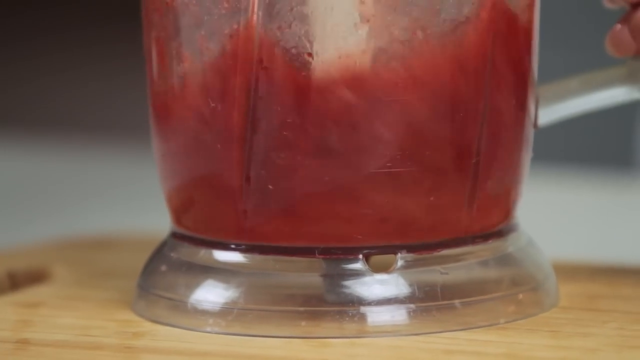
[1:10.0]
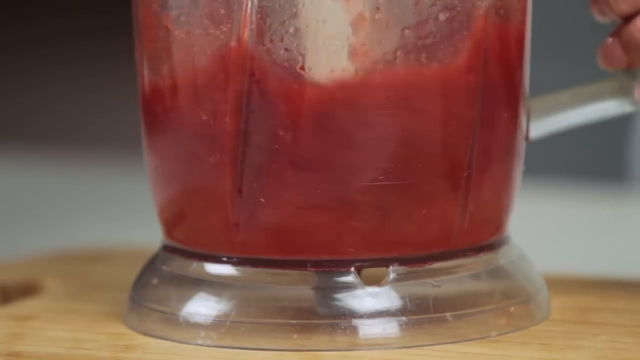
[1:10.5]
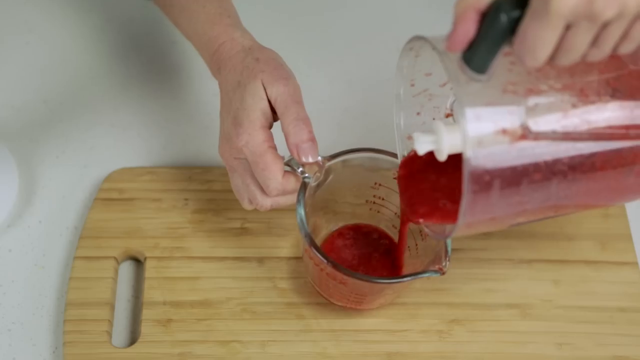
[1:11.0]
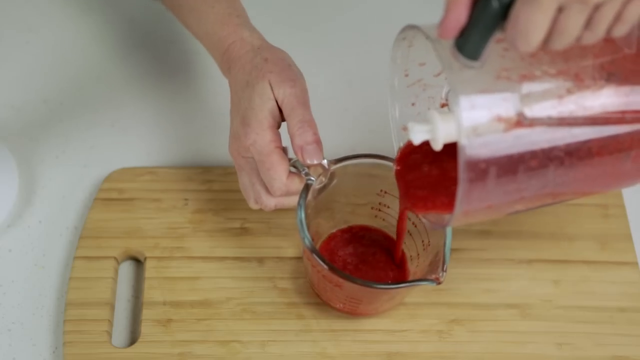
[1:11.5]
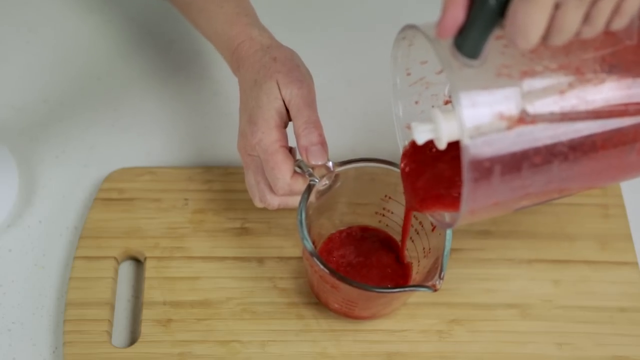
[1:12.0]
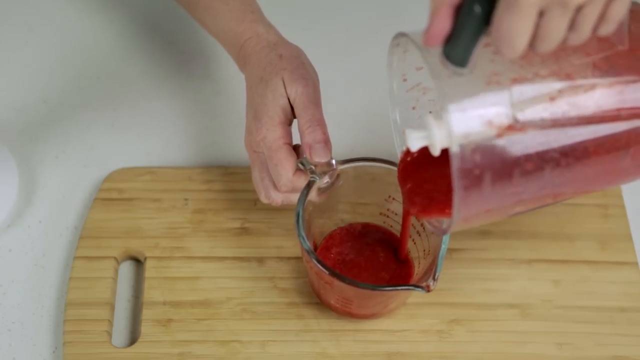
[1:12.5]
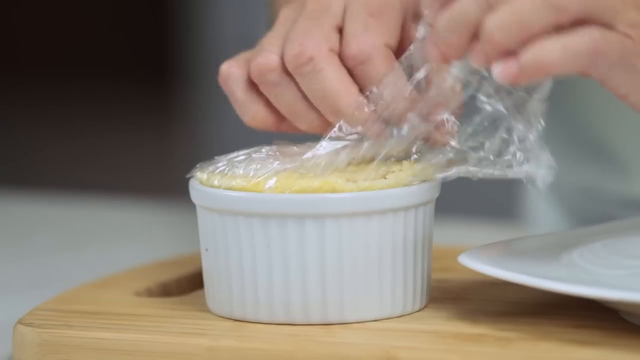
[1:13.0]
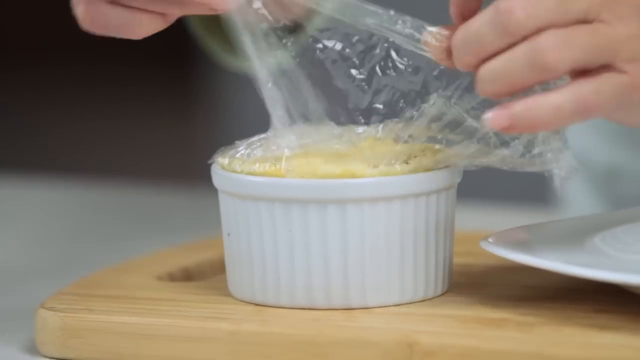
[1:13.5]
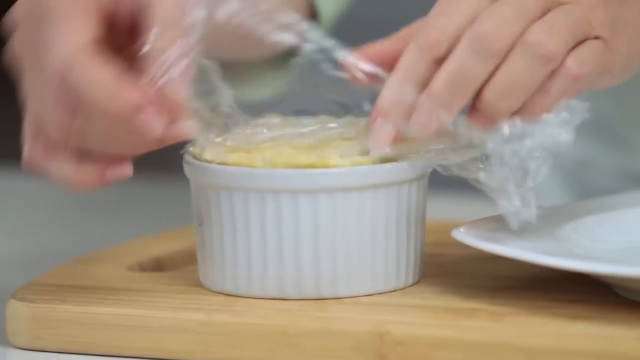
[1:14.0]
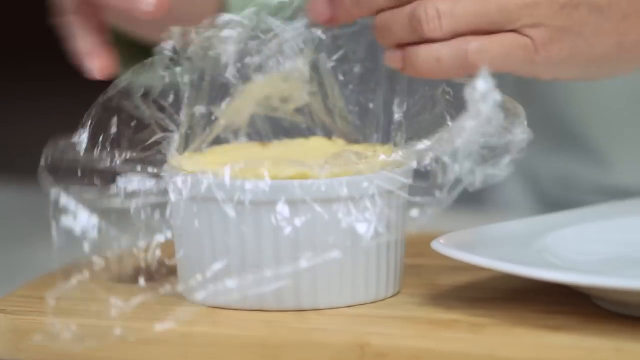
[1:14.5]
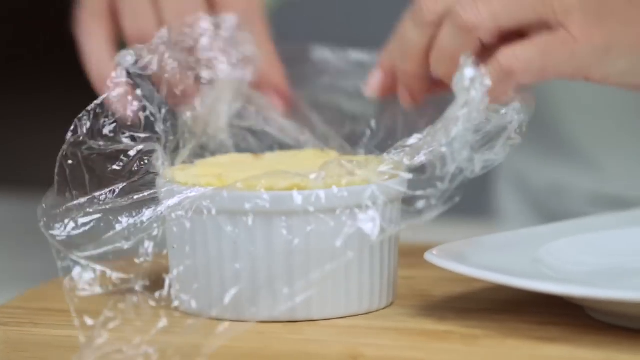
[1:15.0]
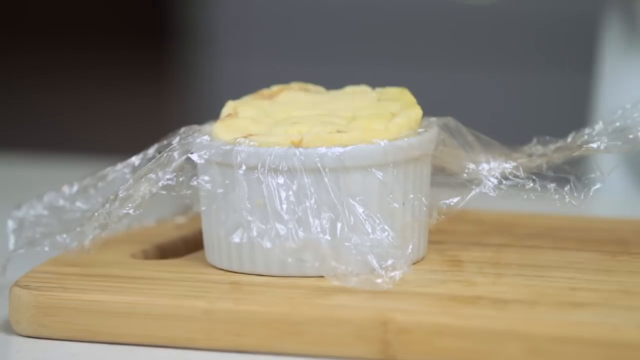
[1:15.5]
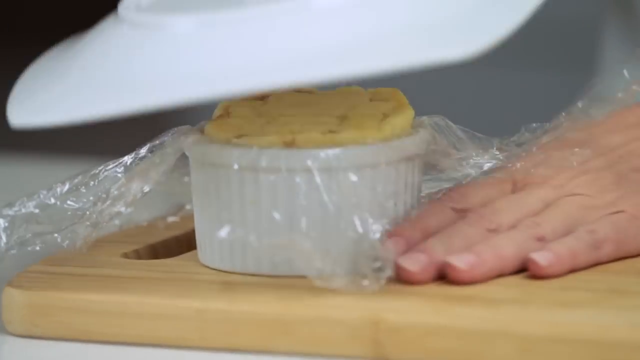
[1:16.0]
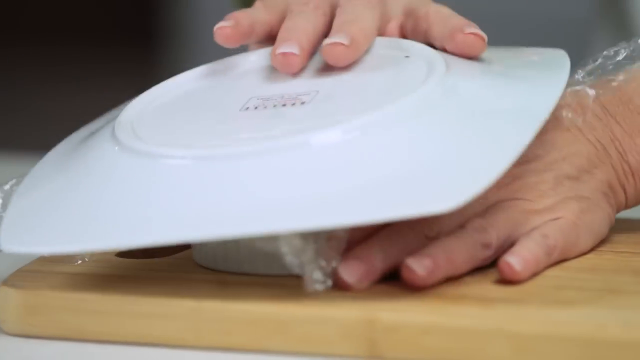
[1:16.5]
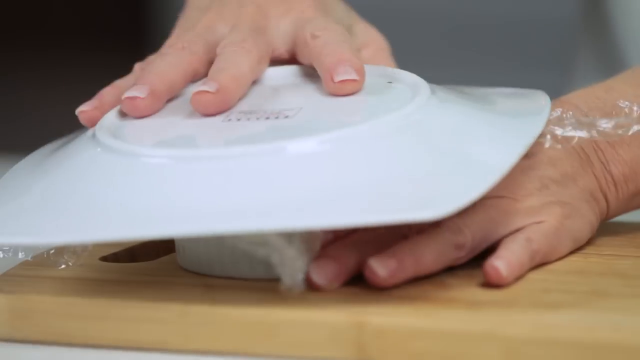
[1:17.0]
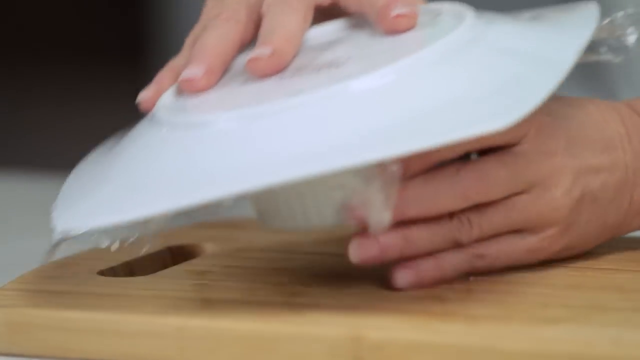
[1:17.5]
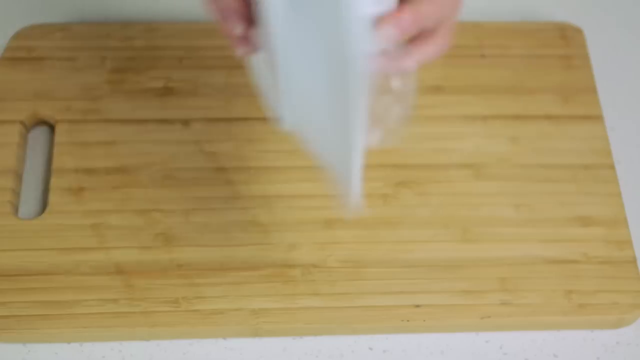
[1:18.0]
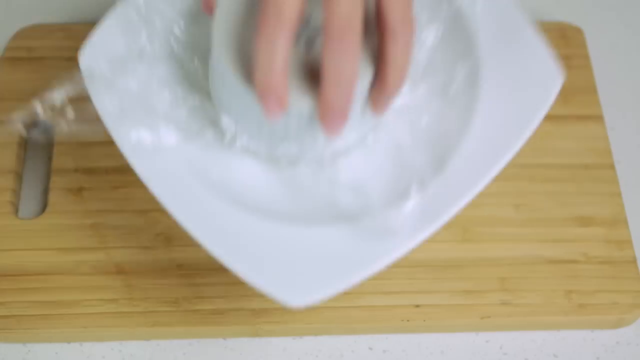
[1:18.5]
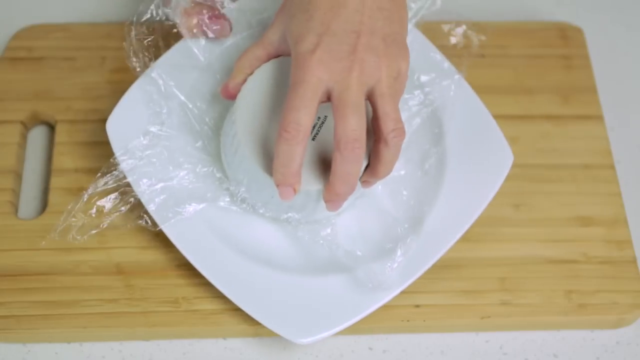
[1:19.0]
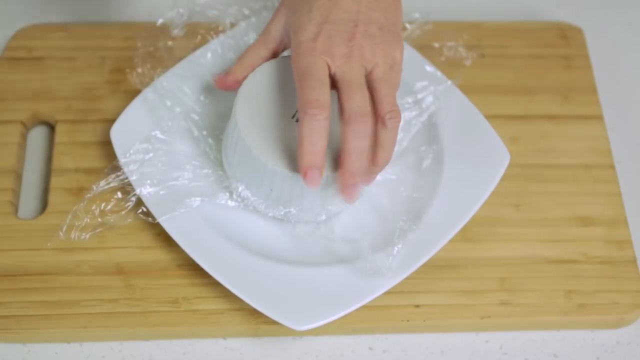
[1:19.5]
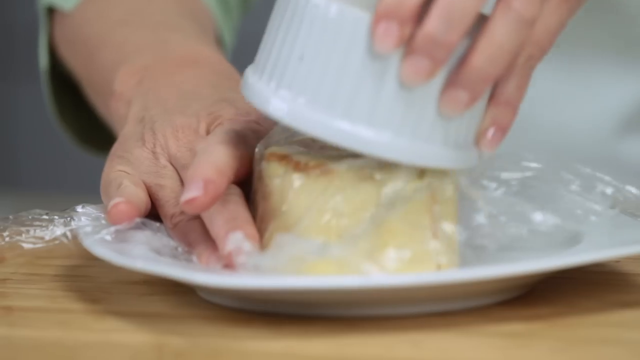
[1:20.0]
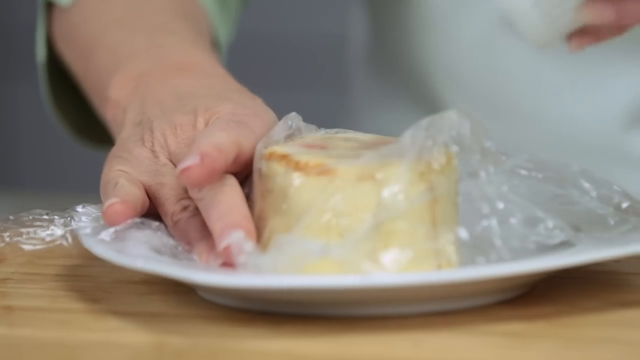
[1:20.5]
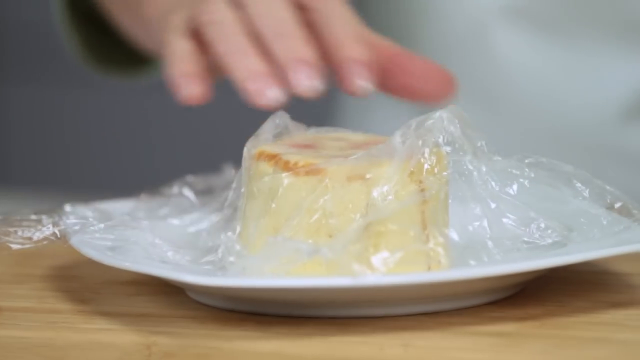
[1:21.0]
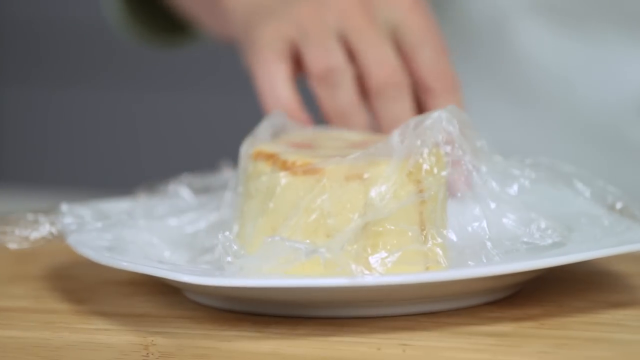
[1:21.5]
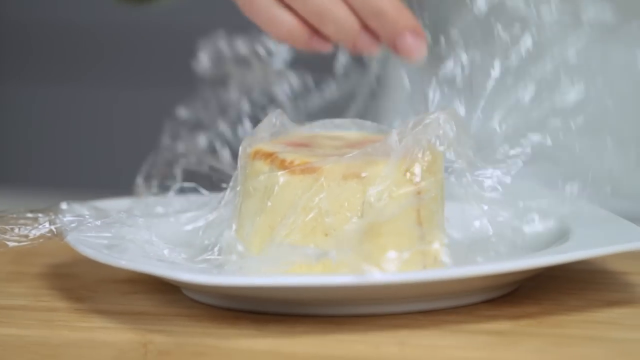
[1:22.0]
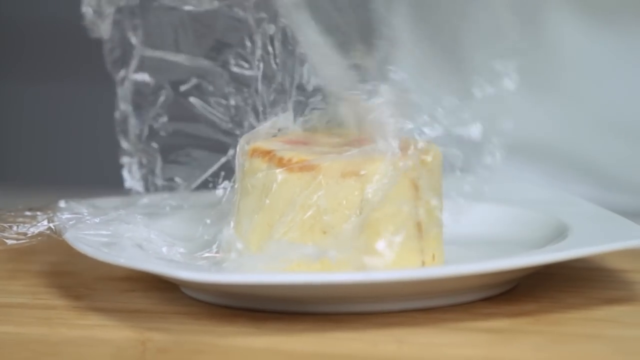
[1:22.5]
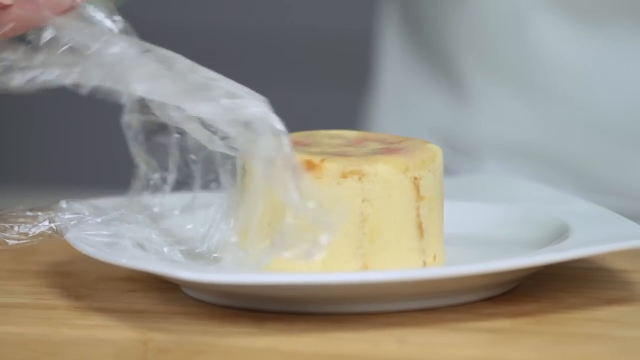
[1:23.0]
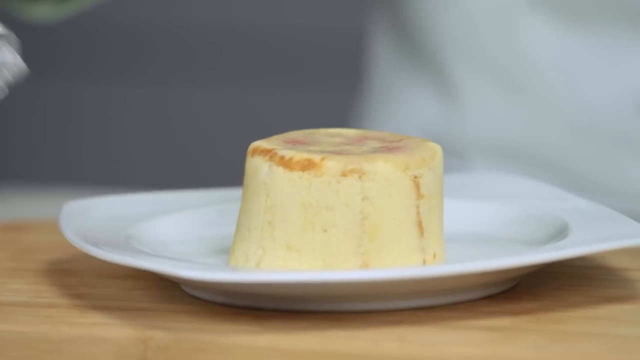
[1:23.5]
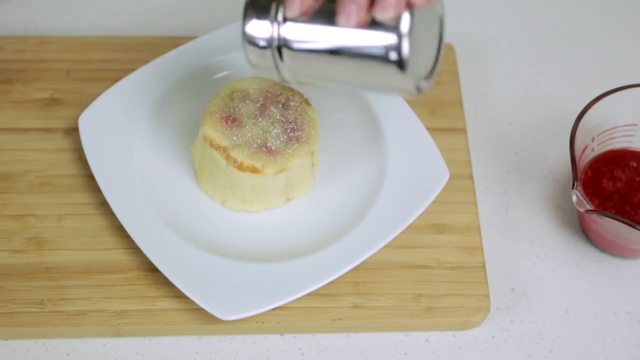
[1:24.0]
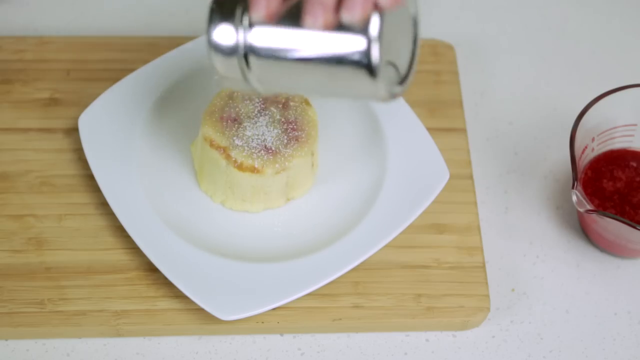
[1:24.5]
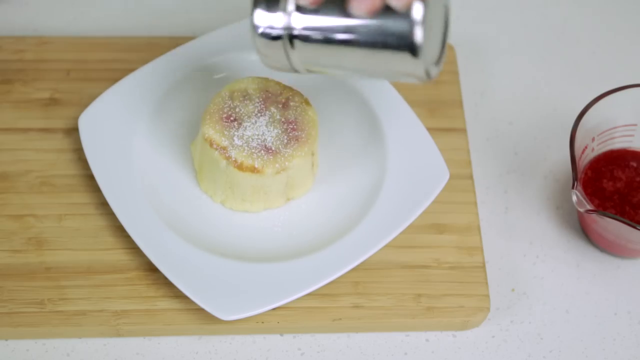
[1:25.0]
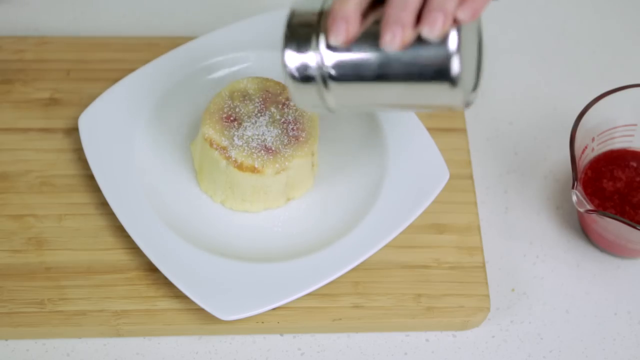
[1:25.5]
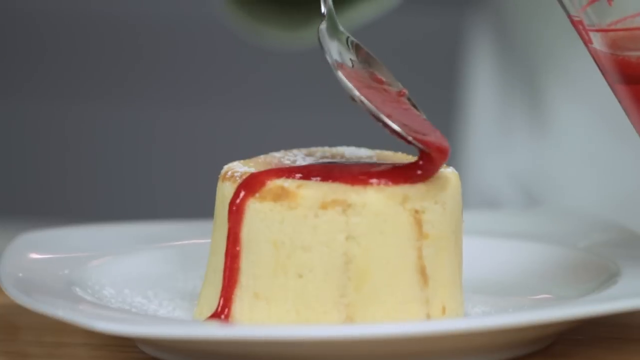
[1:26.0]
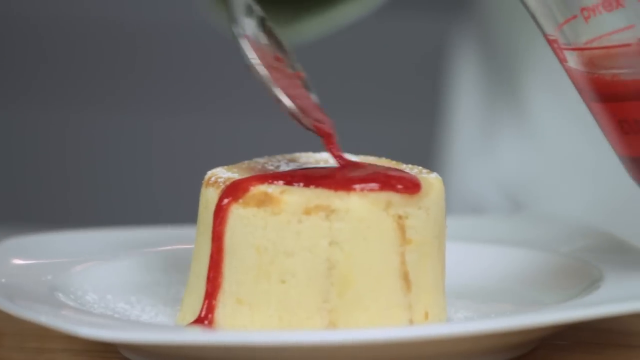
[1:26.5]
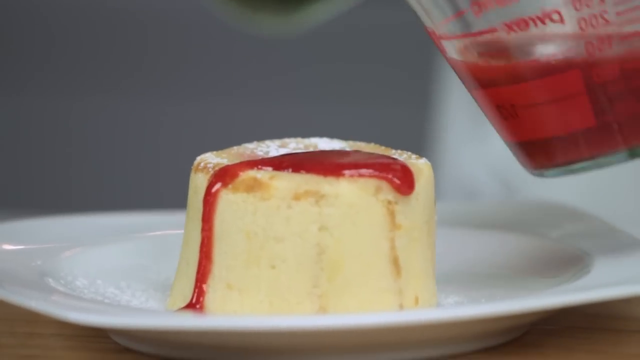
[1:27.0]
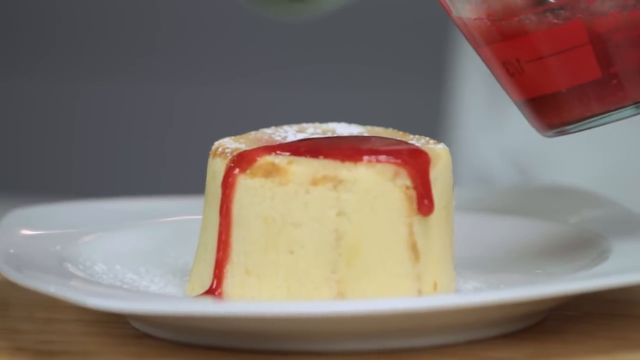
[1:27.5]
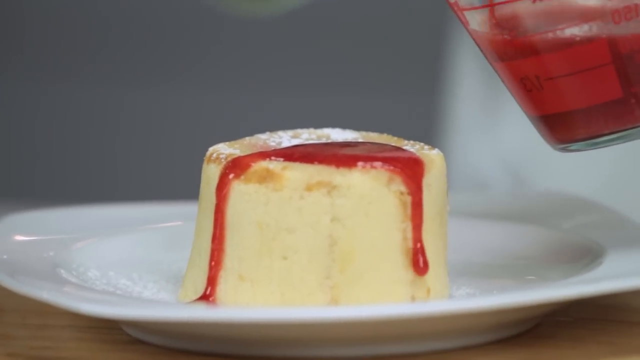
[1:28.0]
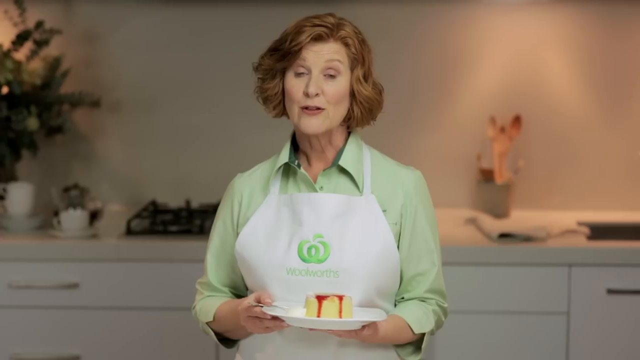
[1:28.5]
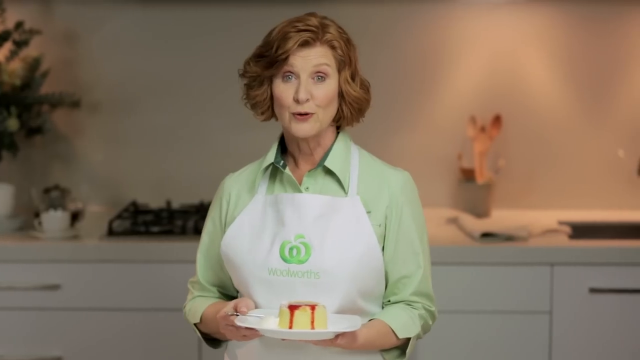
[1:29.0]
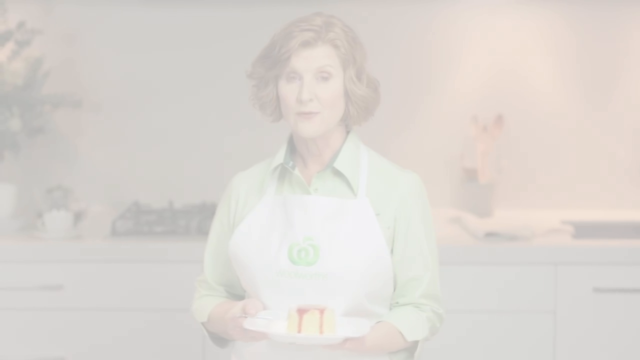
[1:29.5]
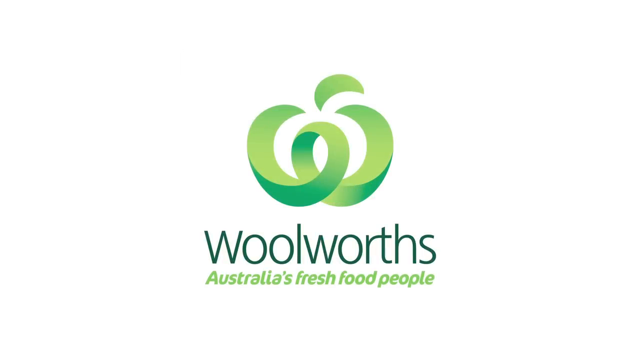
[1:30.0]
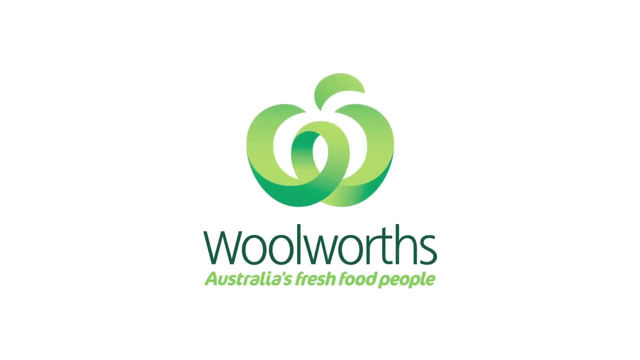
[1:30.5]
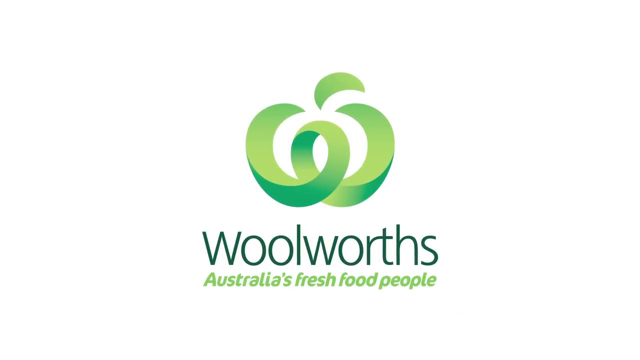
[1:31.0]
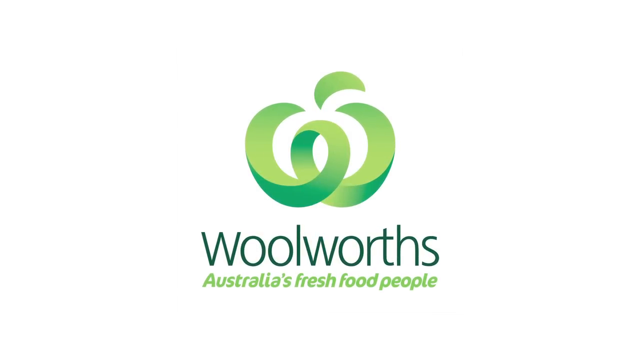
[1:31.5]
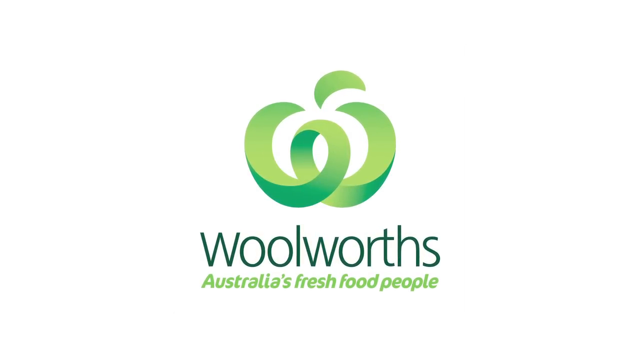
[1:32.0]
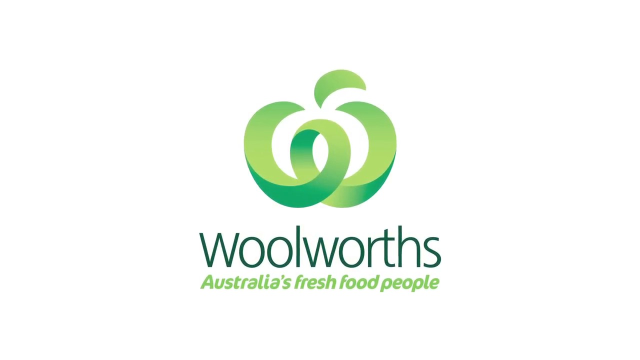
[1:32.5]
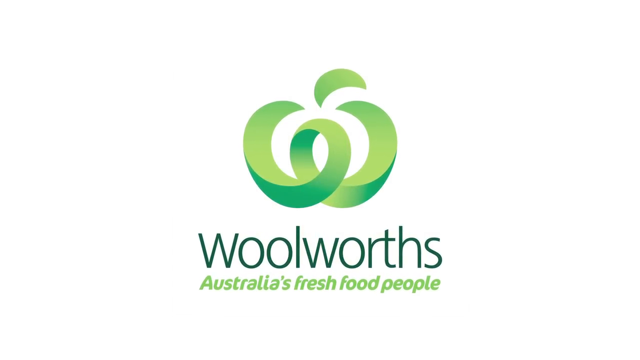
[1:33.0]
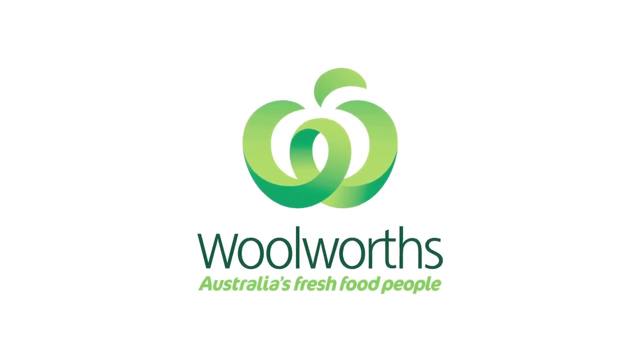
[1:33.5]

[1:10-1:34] A blender has red liquid inside, and its blades are blending the liquid. The person holds the handle of the blender and pours the liquid into a measuring cup held in their right hand; the measuring cup is sitting on a wooden cutting board. The video cuts to the person unwrapping saran wrap from the top of a ramekin that has bread inside. The person puts a white dish on top of the ramekin, flips it over, and pulls the ramekin off, leaving the bread resting on the plate; saran wrap that was inside the ramekin is peeled off. The person grabs a tin cup with their left hand and seems to sprinkle powdered sugar on top of the cake on the dish, then seems to use a spoon to drizzle strawberry syrup over the cake. The video then cuts to a woman wearing a white apron and a green shirt talking to the camera while holding the cake with both hands.